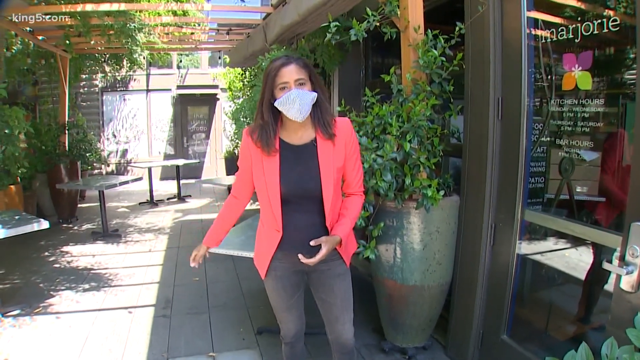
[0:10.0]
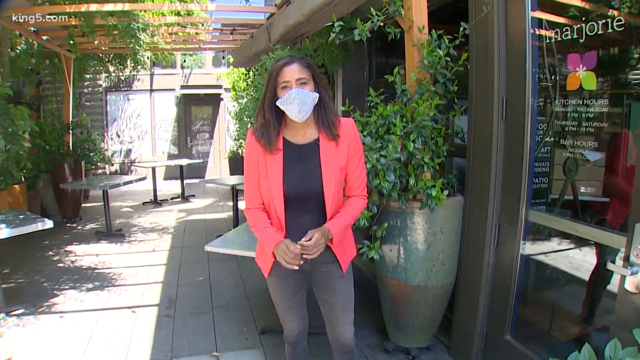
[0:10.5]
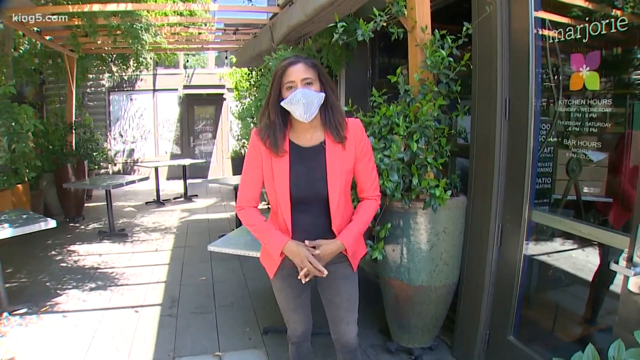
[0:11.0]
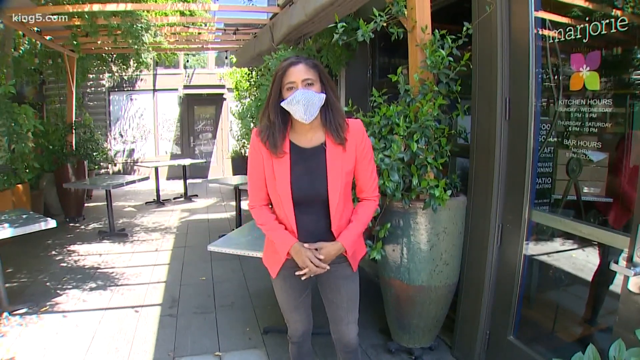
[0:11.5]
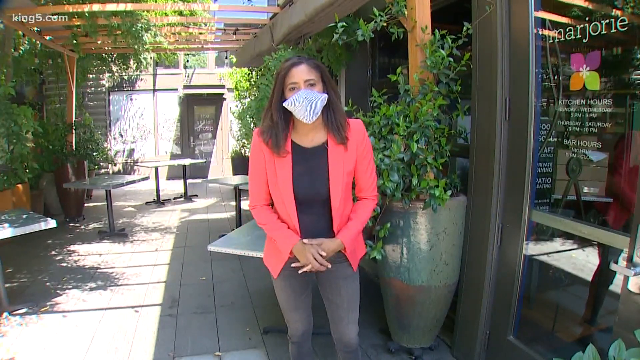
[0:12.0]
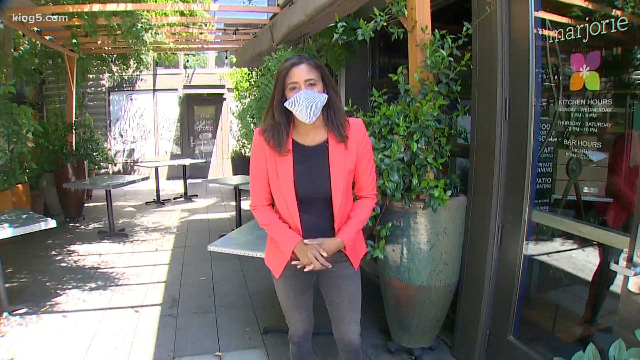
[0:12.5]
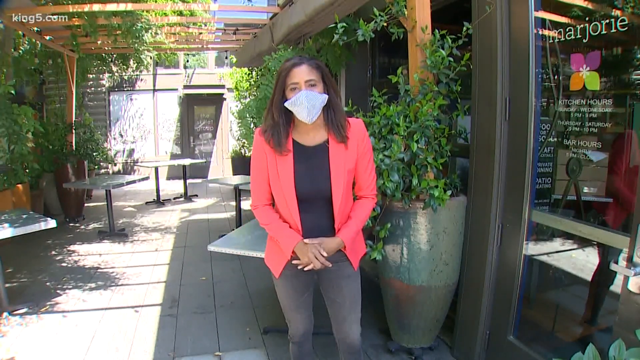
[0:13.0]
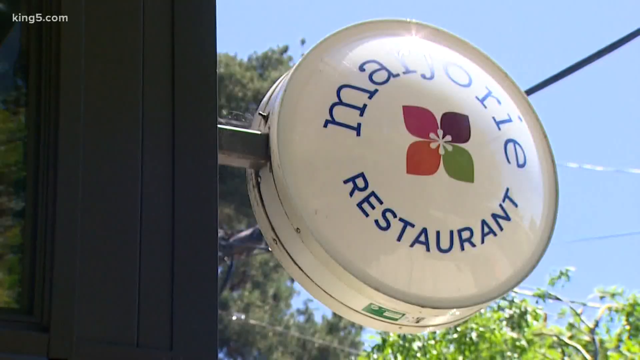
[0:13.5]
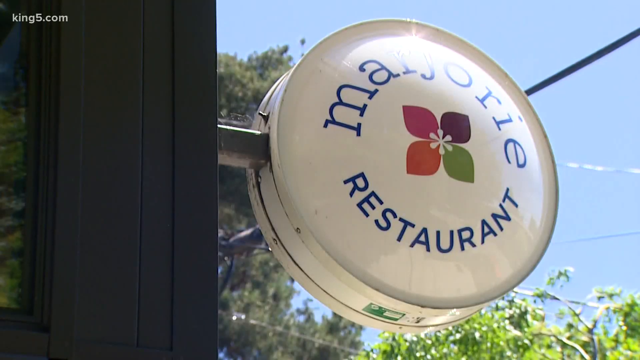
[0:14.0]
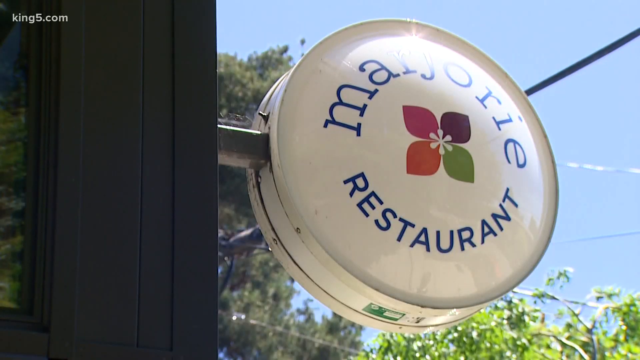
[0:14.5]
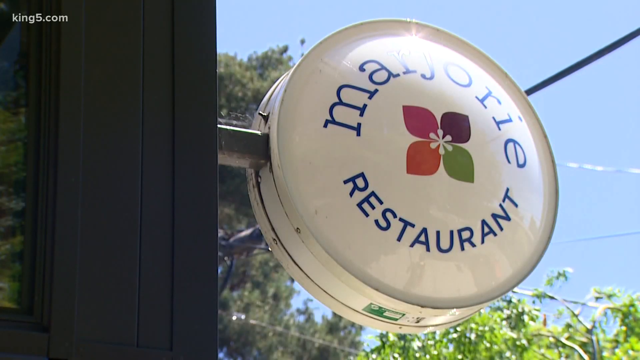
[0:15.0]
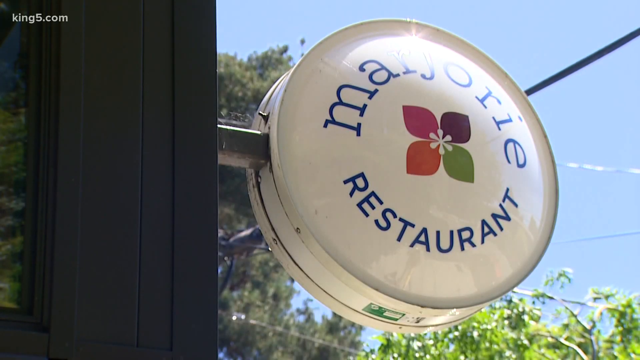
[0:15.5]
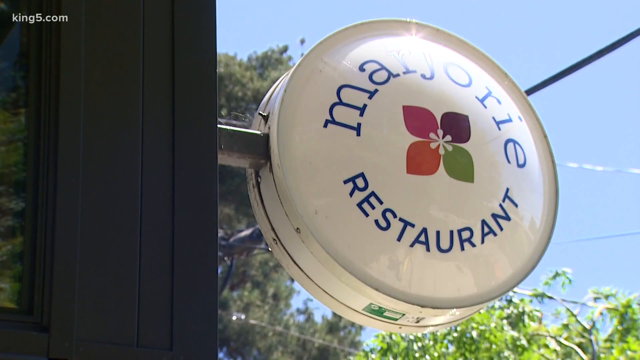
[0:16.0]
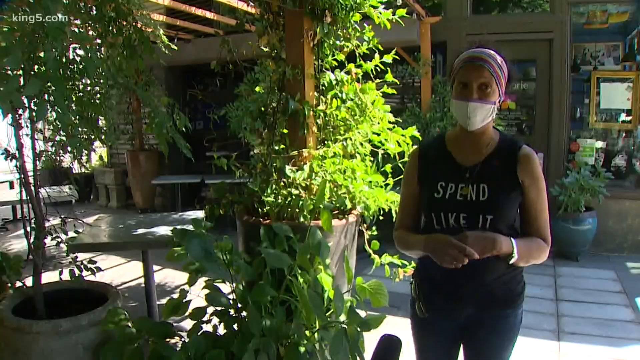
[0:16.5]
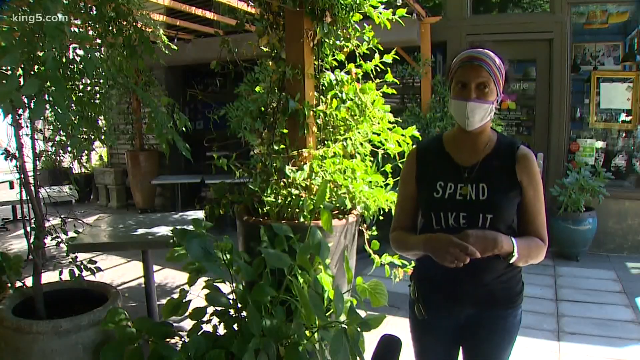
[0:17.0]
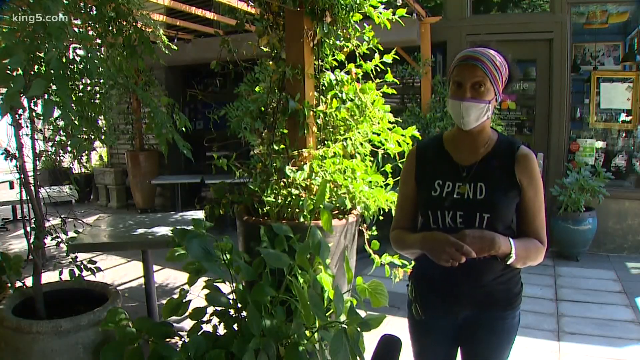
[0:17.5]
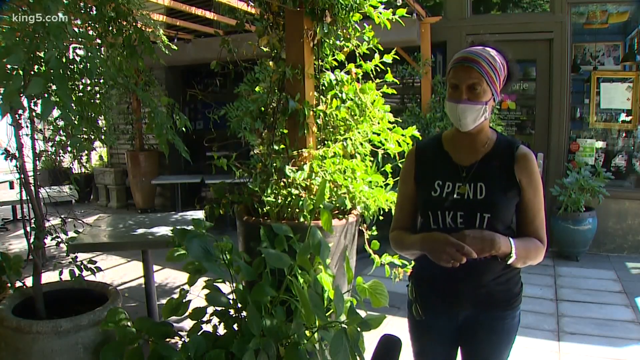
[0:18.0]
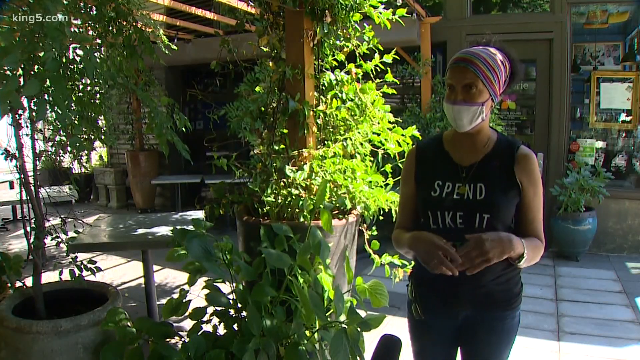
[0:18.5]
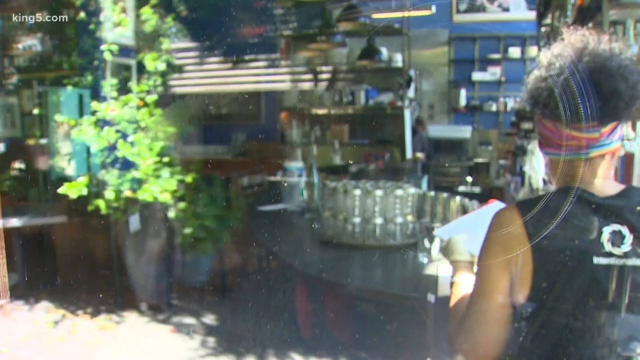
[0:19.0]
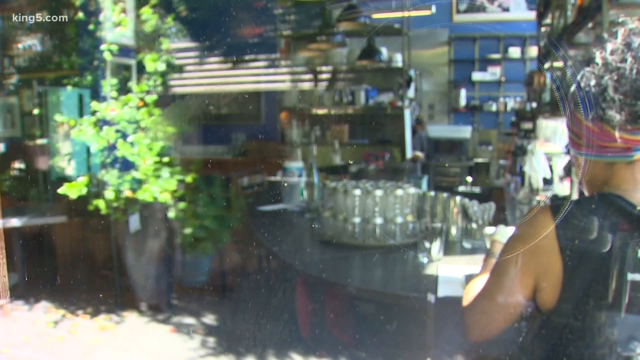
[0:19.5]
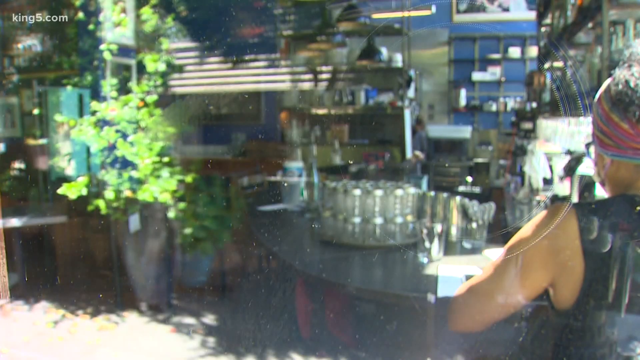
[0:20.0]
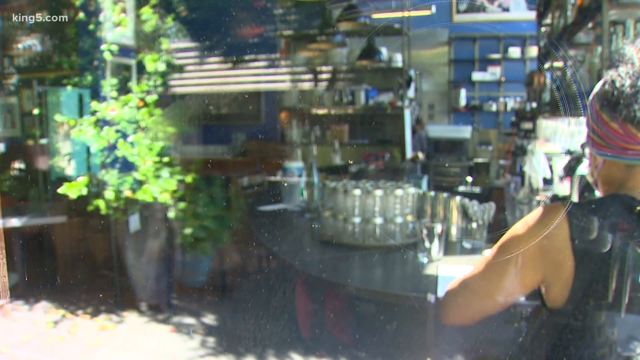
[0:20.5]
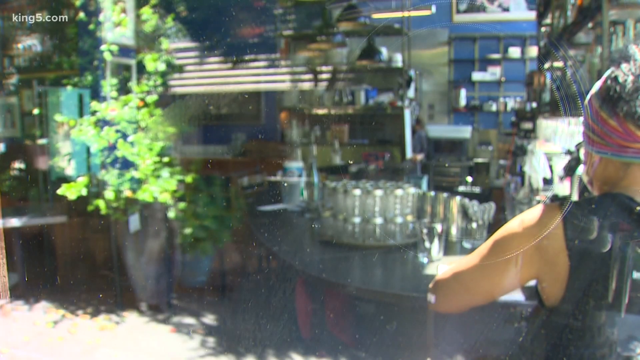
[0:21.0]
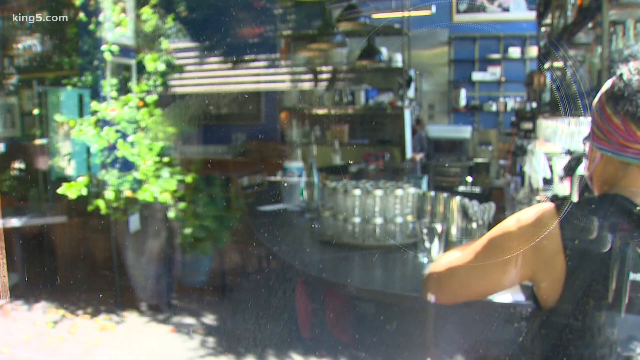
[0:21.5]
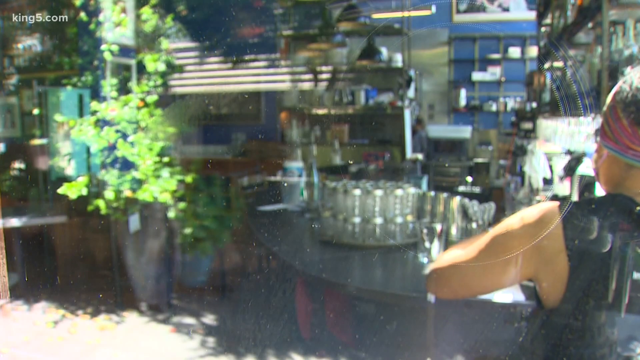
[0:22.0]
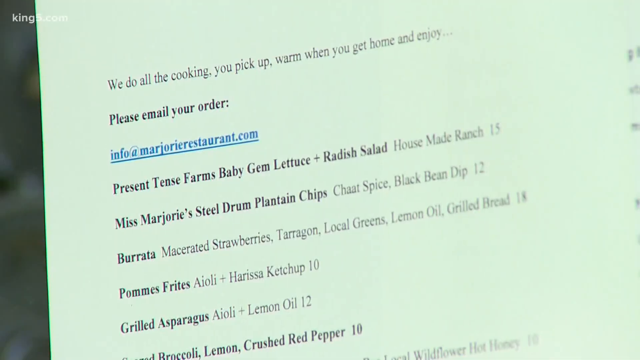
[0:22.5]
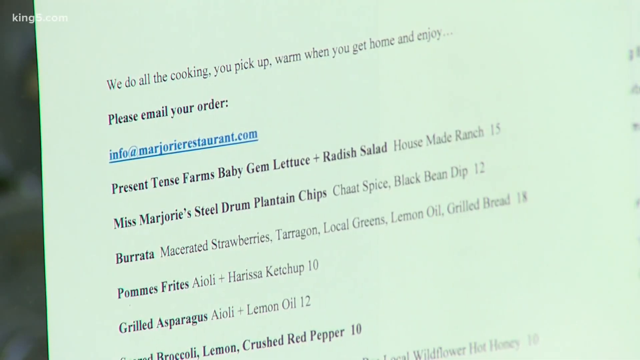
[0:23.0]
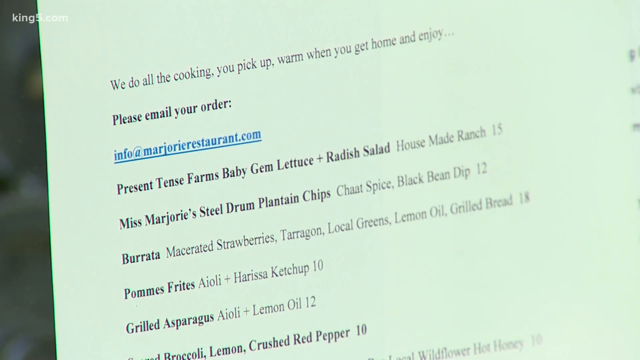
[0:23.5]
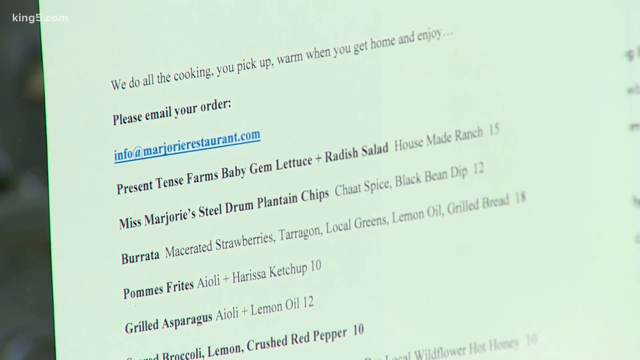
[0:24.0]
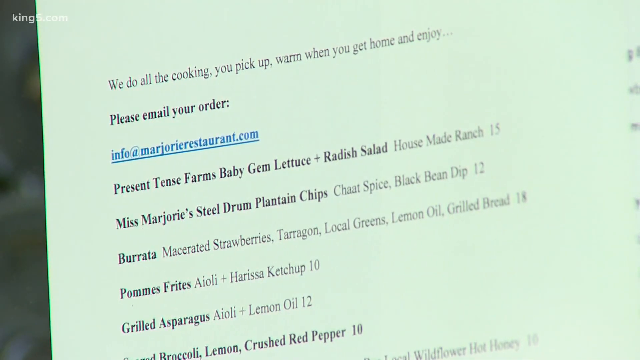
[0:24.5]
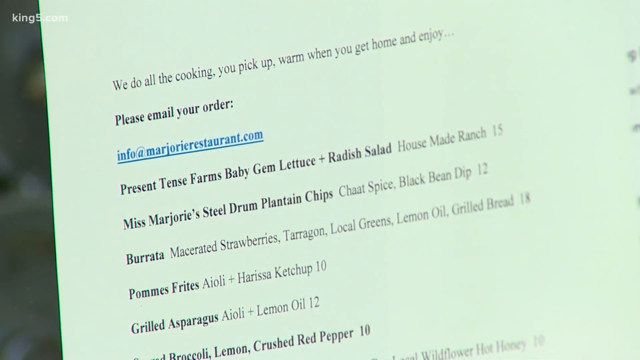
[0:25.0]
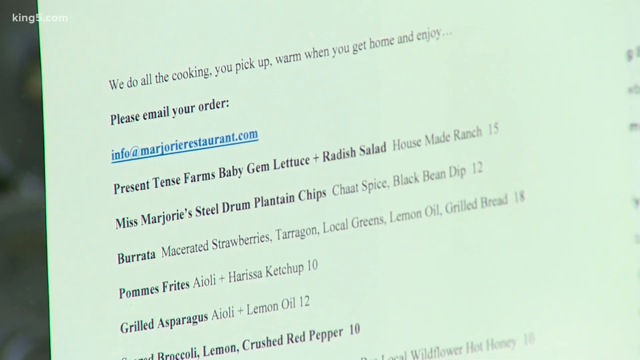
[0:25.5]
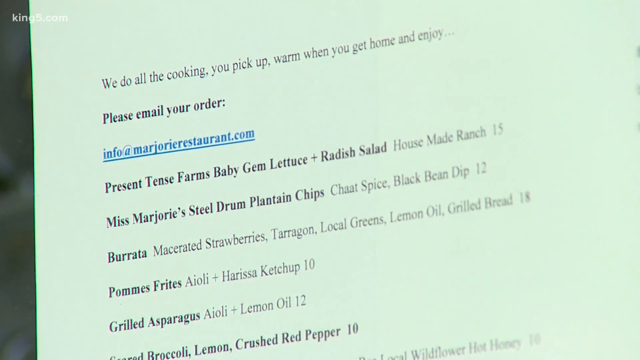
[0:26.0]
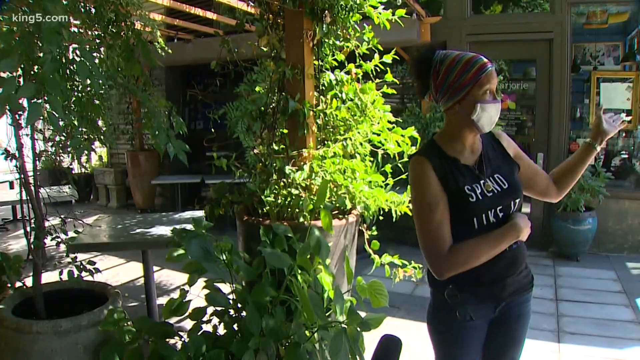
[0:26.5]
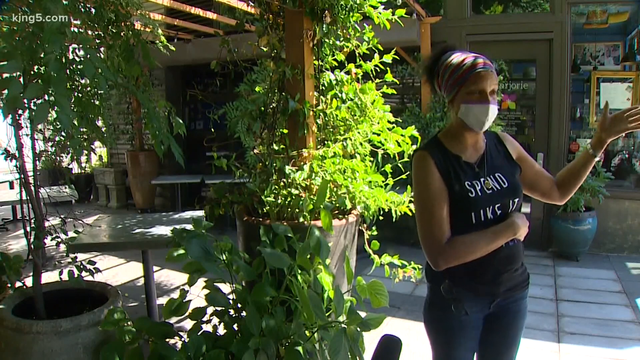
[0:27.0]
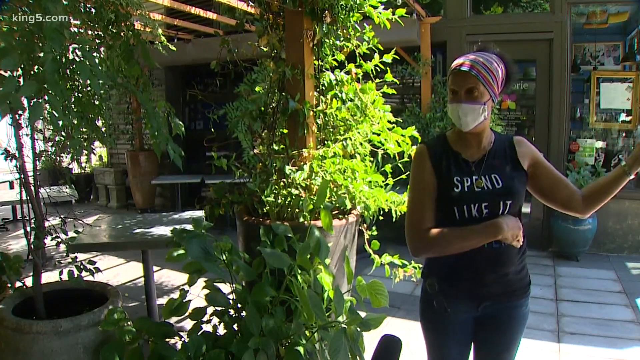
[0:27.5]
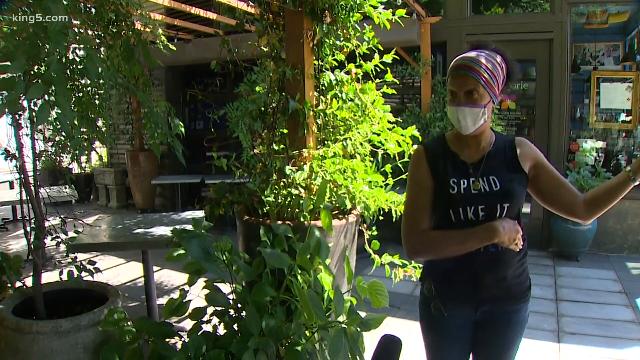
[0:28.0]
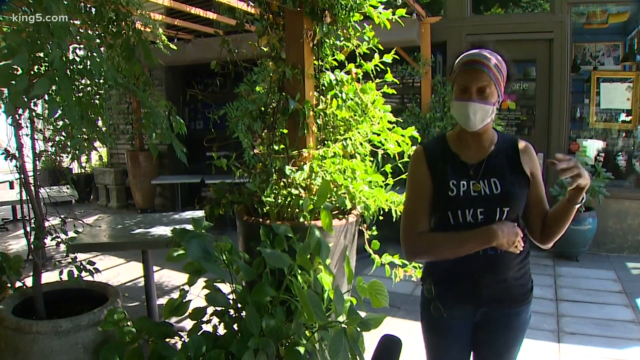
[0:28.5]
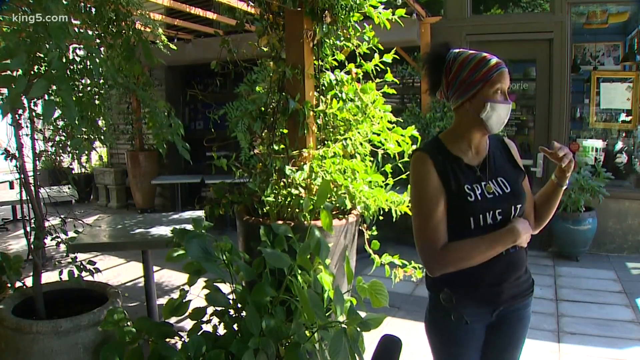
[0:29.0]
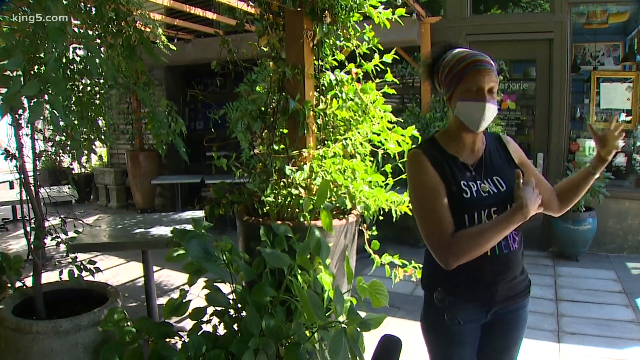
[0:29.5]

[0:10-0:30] A woman is outside a store called Marjorie. The door shows "kitchen hours" and "bar hours," and there is an outdoor patio. The woman, who seems to be doing a news story, wears an ill-fitting COVID mask and points to the outdoor patio area. Text reads "Marjorie restaurant." Next, someone is being interviewed: she wears a kind of tribal-looking head wrap, like a kerchief, with some hair coming out of it, and a black tank top.